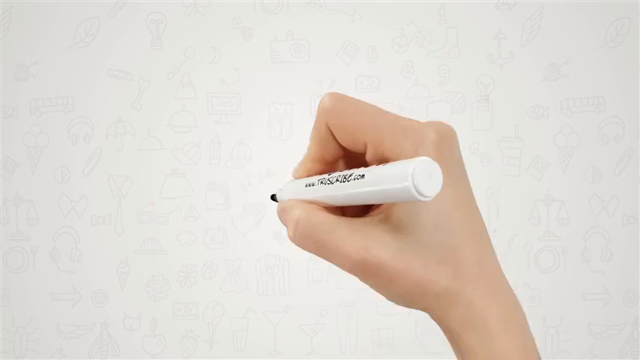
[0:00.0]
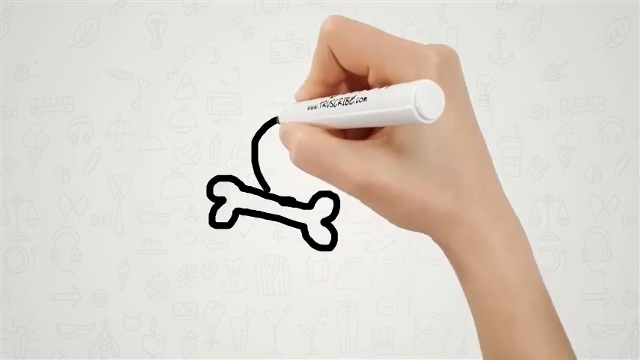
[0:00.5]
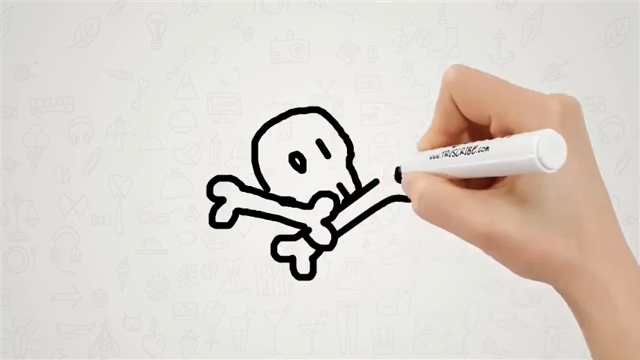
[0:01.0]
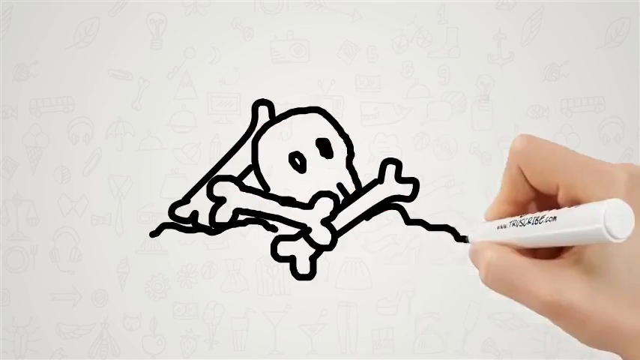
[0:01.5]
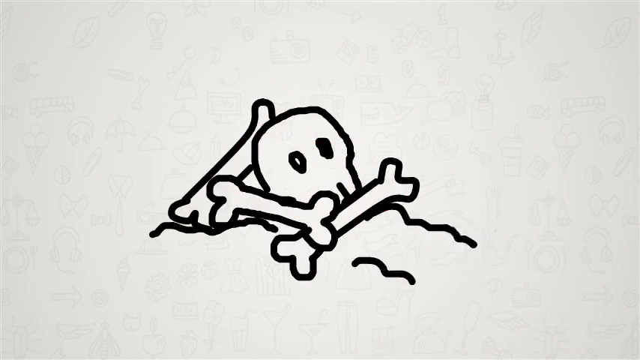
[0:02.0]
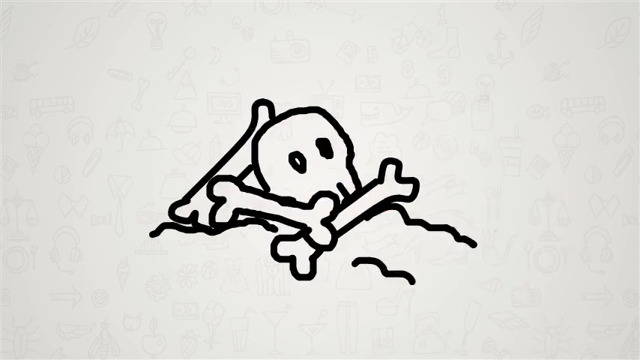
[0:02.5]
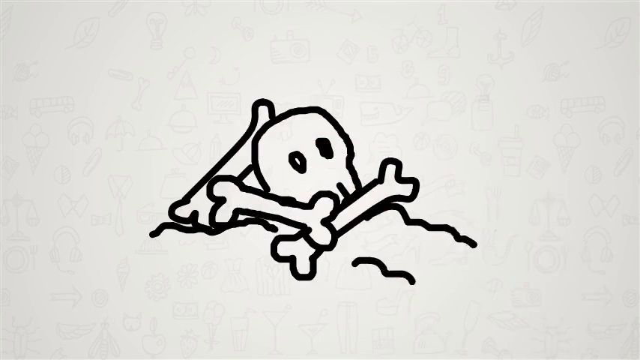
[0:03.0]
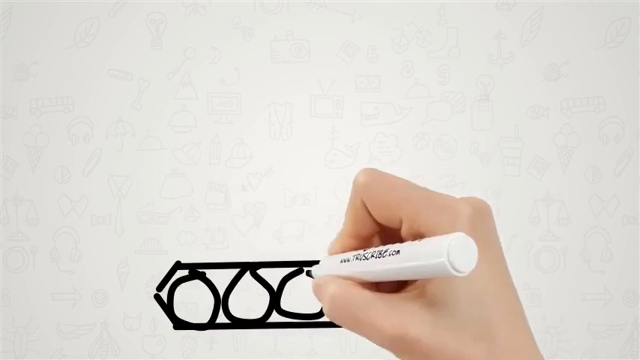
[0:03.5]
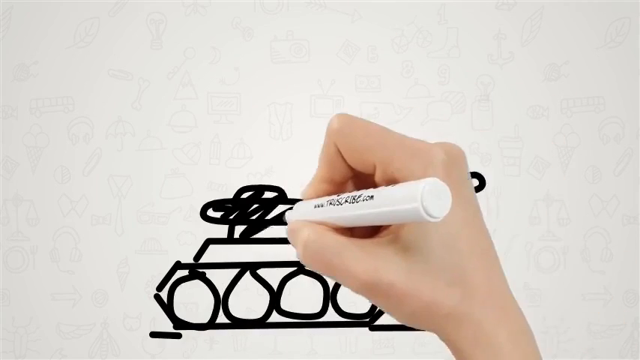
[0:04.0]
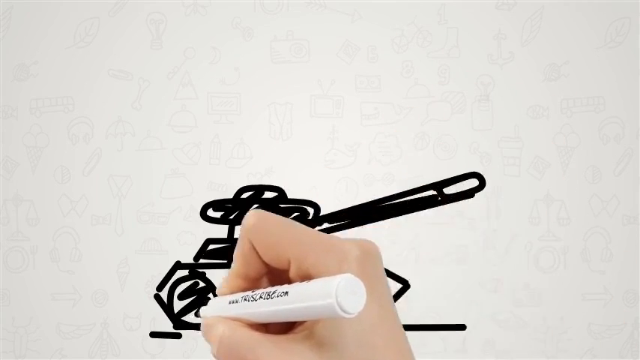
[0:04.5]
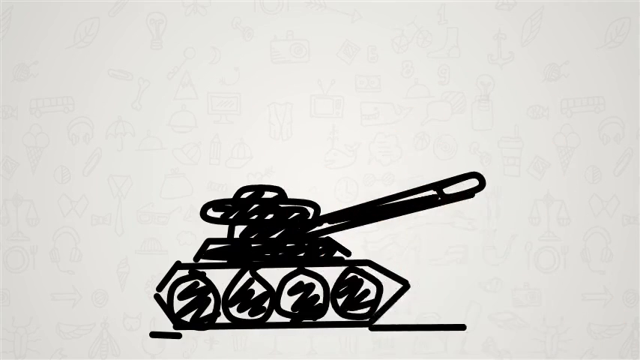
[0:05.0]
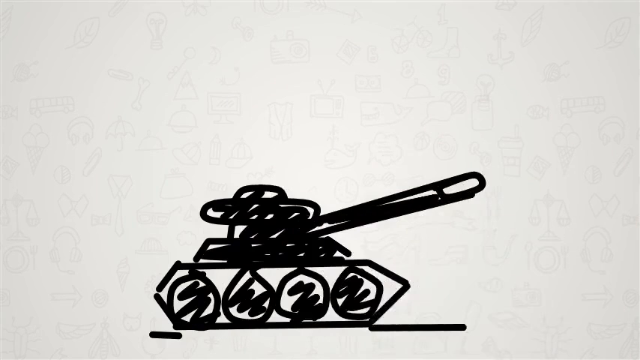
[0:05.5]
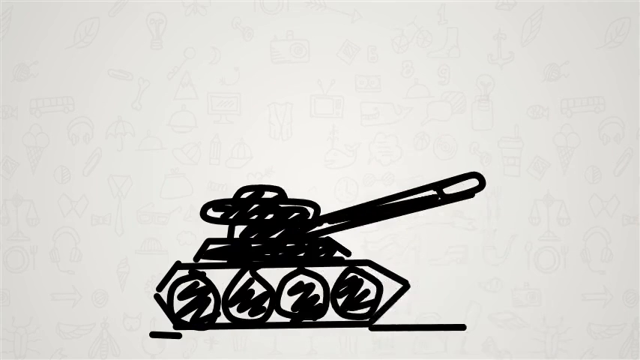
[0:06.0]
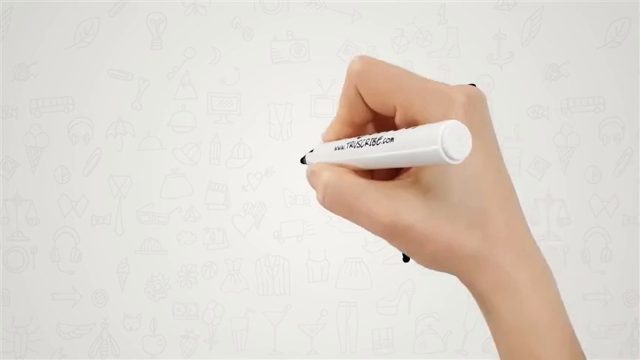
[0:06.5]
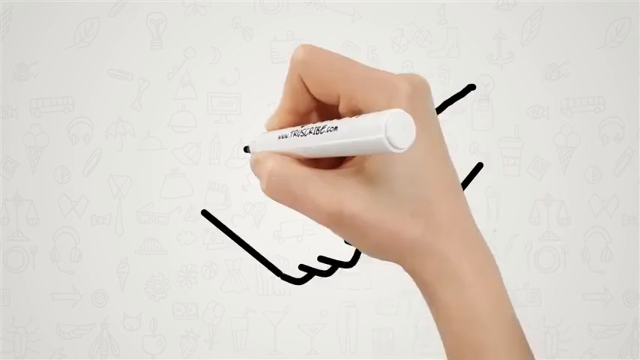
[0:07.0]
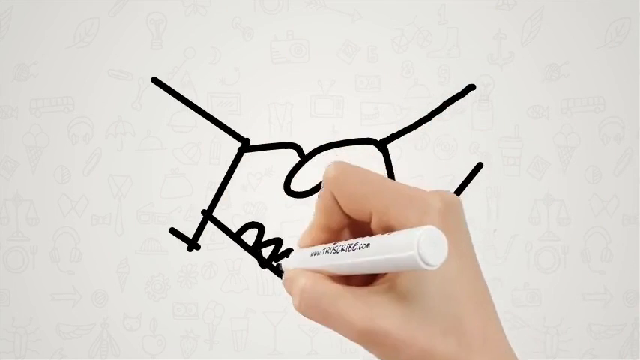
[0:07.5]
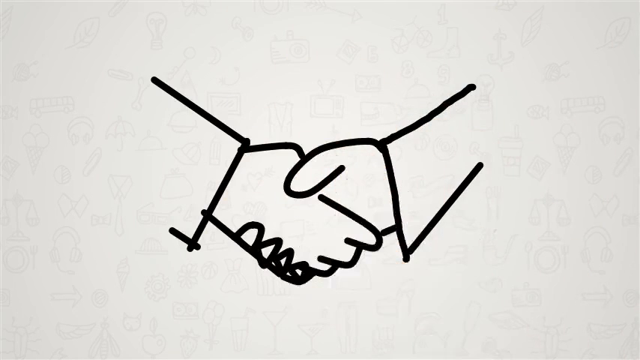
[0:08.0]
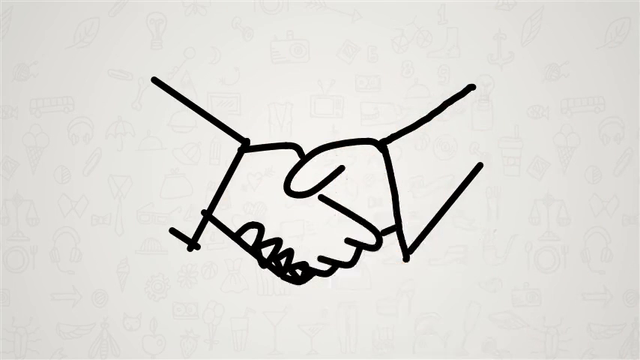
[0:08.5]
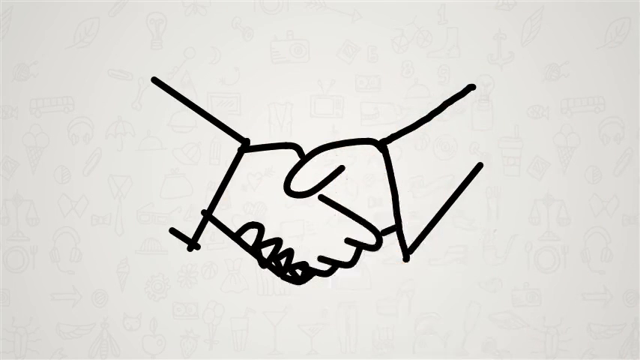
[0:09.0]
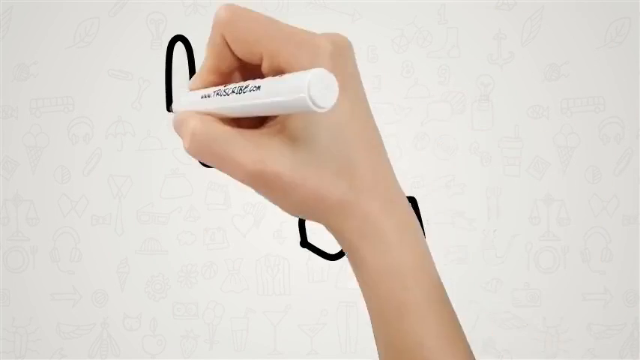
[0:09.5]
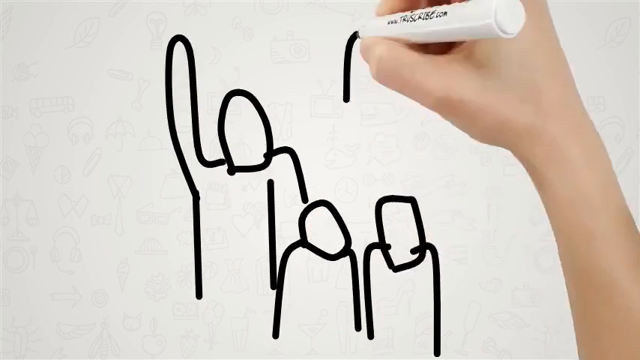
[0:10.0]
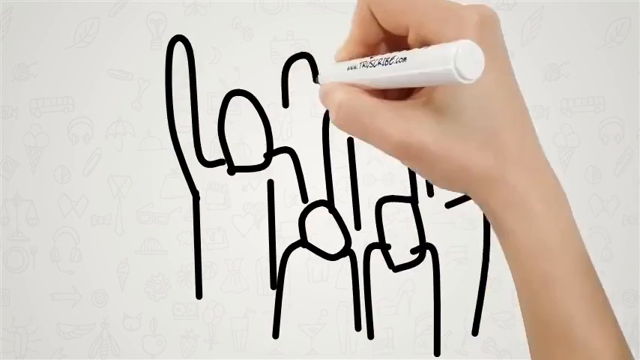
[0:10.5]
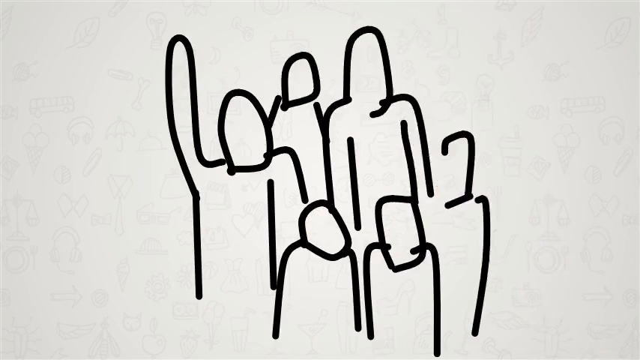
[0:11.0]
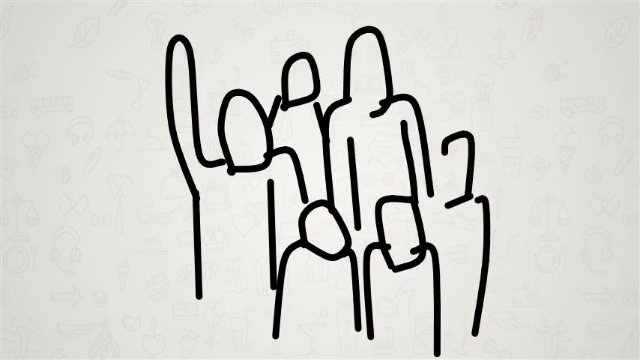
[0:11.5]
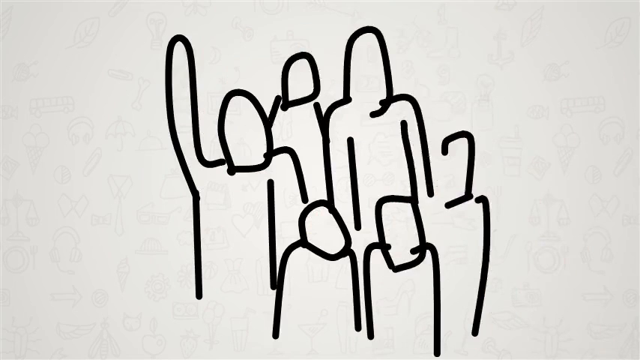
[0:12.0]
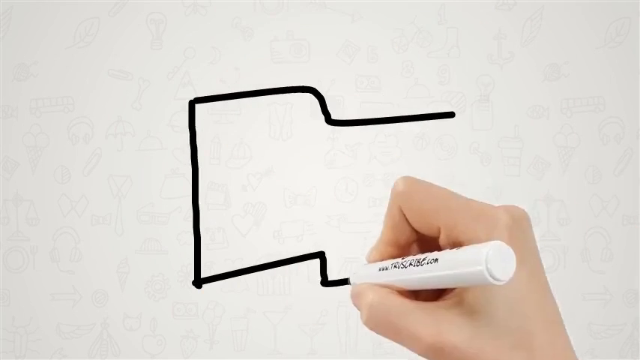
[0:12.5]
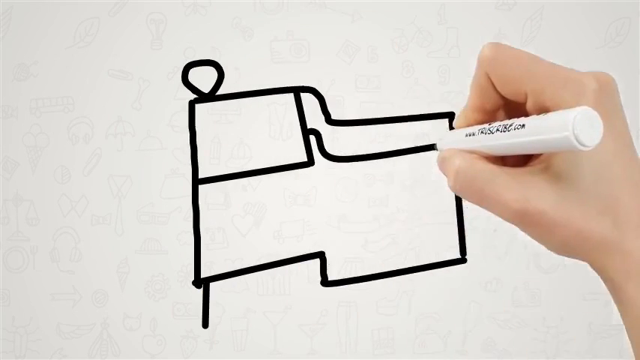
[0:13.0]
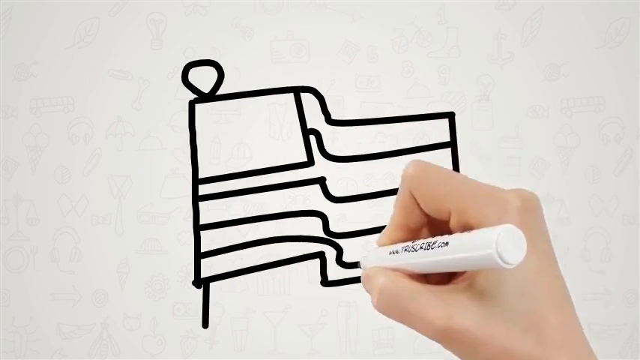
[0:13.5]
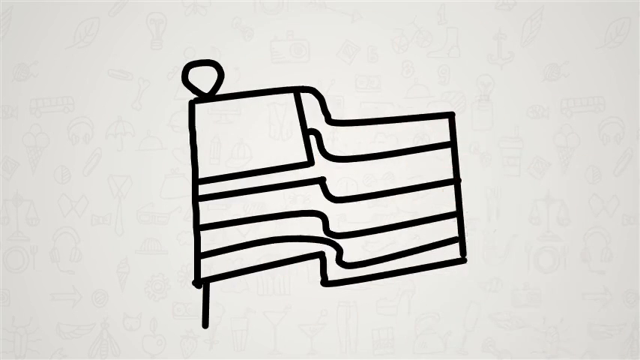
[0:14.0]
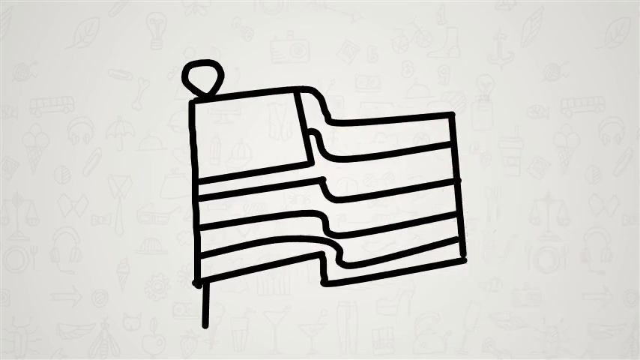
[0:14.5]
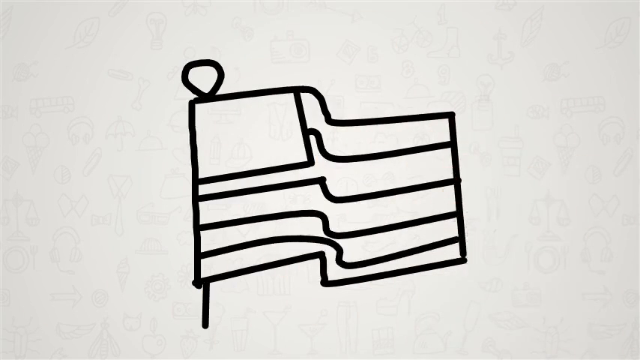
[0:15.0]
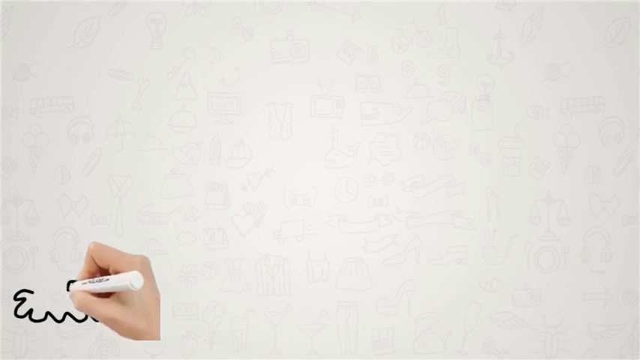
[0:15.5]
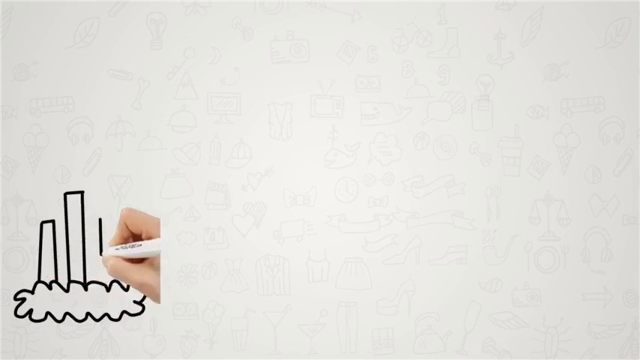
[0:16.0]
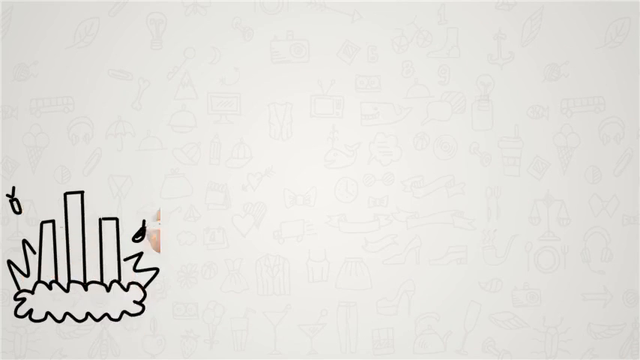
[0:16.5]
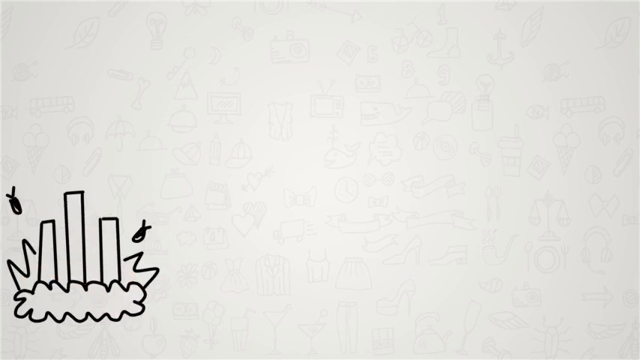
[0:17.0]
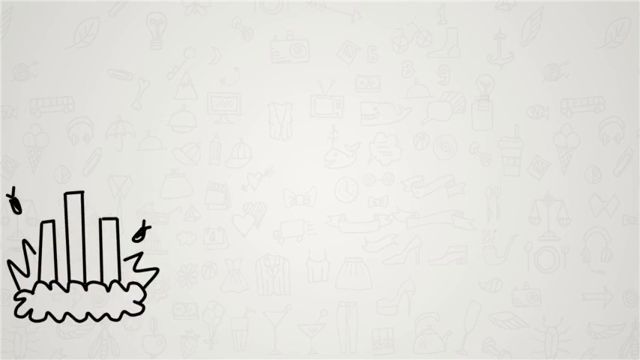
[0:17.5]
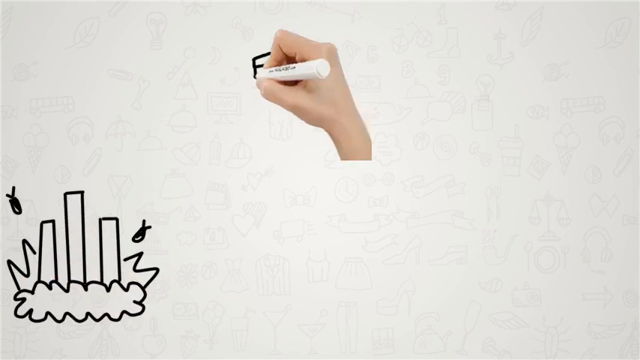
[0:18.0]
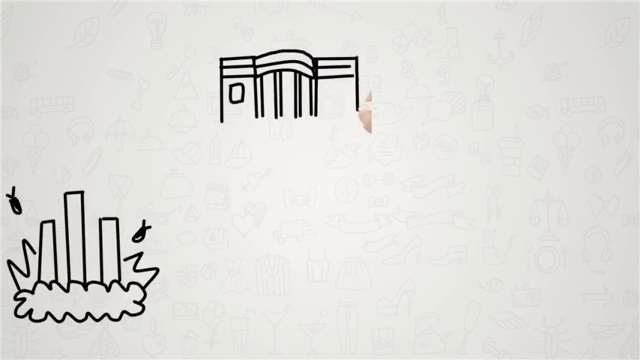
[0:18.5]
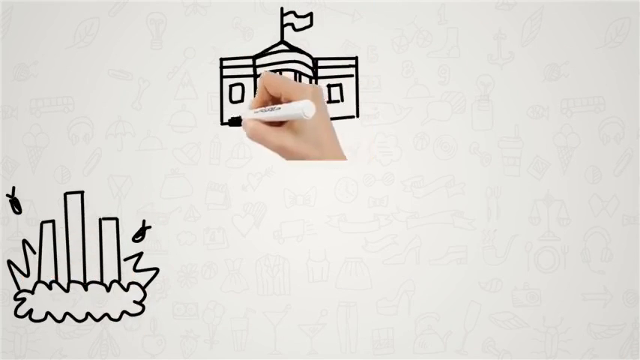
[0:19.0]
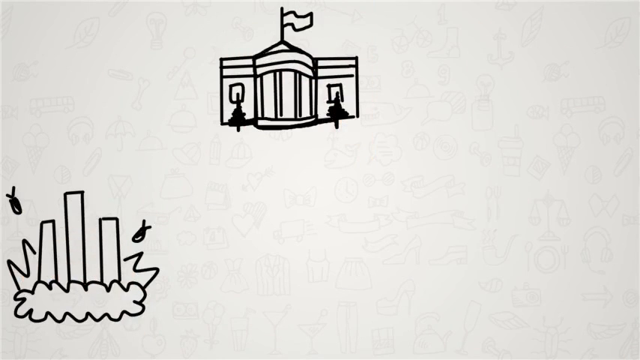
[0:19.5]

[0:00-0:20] The video focuses on an all-white background where only one person's hand is visible. The person is white and the hand looks fairly young. They hold a white marker pen that writes in black and draw various pictures, all in black. The first picture is a skull with two eyes and an upward mouth and three bones around it, one on the left-hand side, one in front and another behind; it is on what looks like the sea, or some lines representing the sea. That disappears, and the hand and pen draw what looks to be a tank in side view, with four circular wheels and a long gun turret whose top is also visible; the tank is then shaded in black. Next comes a side view of two arms and hands shaking each other's hands, with the fabric they are wearing visible, also all in black. That disappears and a drawing of six people follows, shown only as outlines; one of them appears to have an arm in the air, and they are all standing close and grouped together. Then comes a drawing of a flag with three horizontal lines, a square in the top left-hand corner, a little ball at the very top and a line at the bottom representing the flagpole. The hand then draws what looks to be two little bombs, little atomic bombs, coming down onto what looks like a cloud with four columns coming out of the top and explosions around it, apparently representing explosions from bombs; this appears in the bottom left-hand corner of the screen. While that remains in the bottom left-hand corner, what looks like a drawing of the White House appears at the top centre, with two trees either side and a flag at the top.